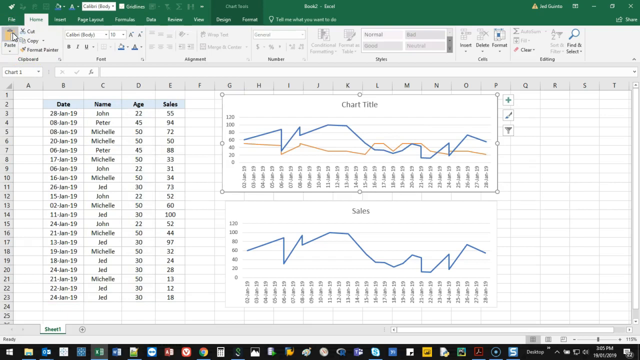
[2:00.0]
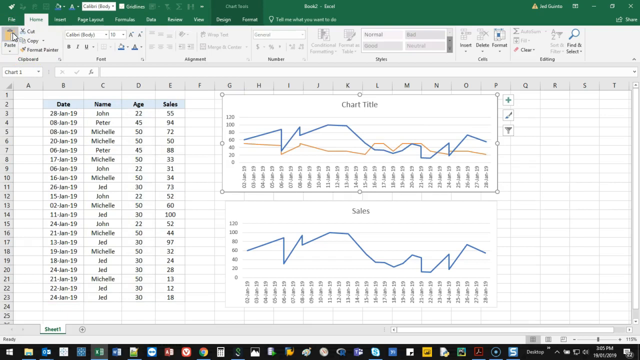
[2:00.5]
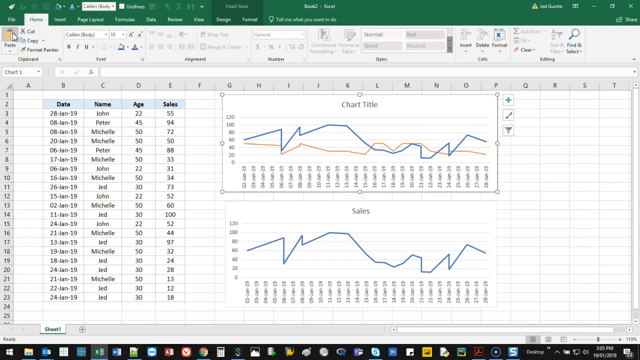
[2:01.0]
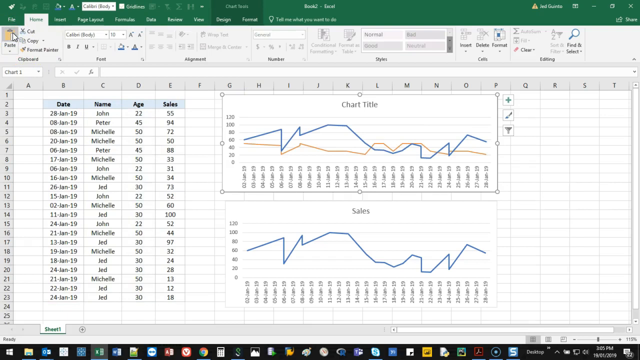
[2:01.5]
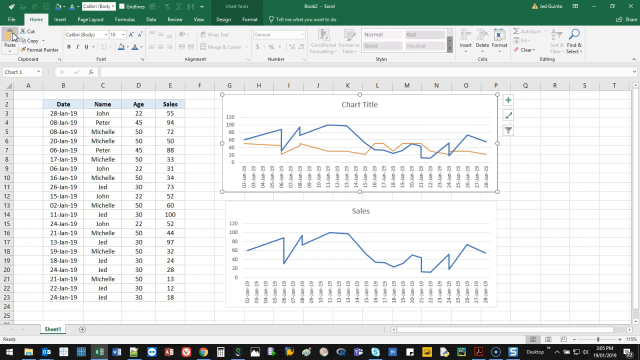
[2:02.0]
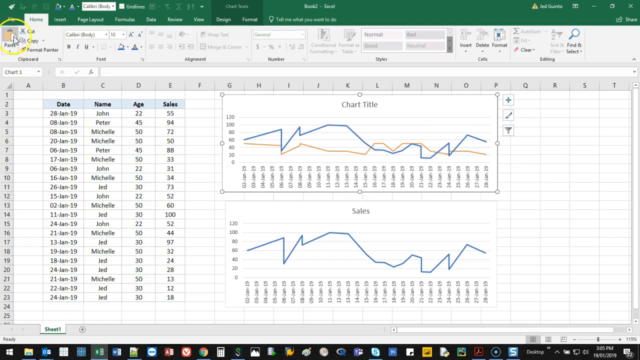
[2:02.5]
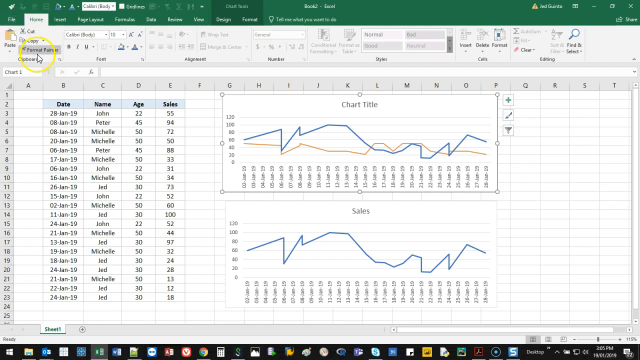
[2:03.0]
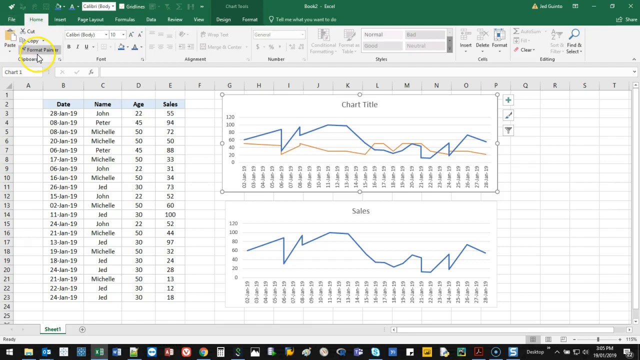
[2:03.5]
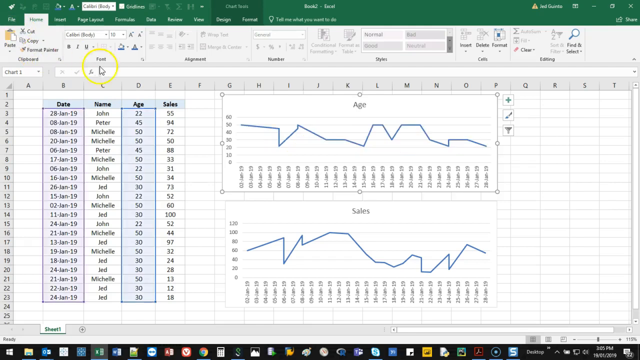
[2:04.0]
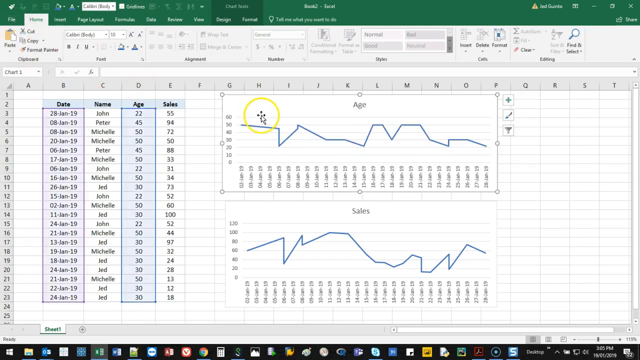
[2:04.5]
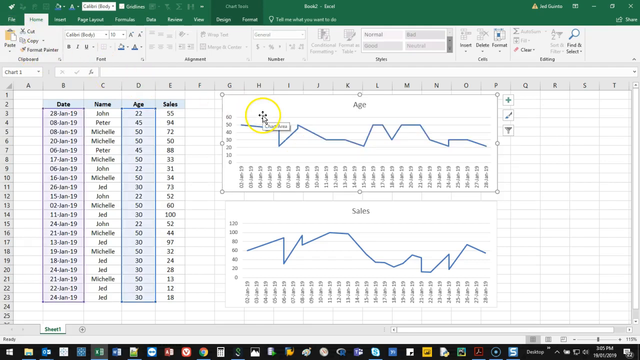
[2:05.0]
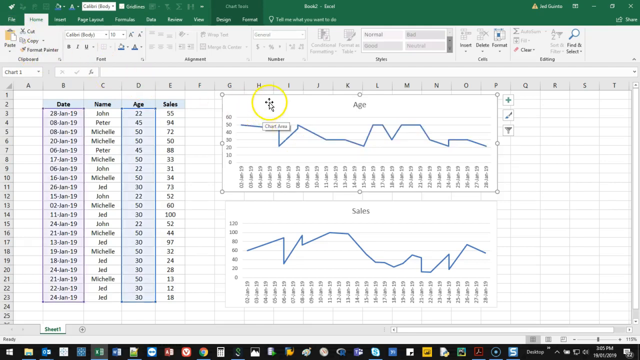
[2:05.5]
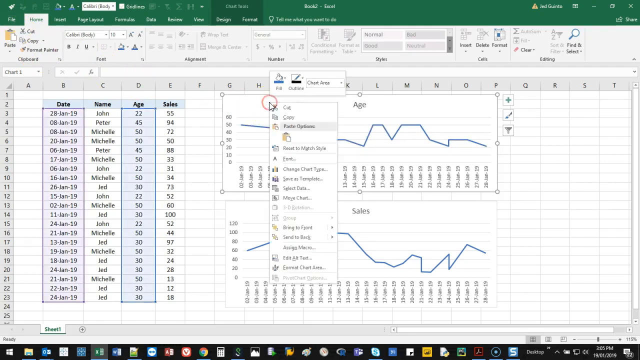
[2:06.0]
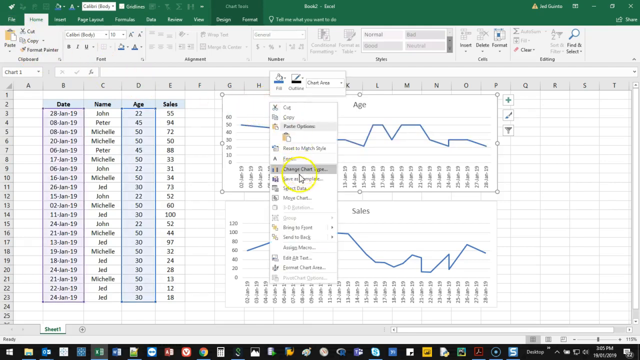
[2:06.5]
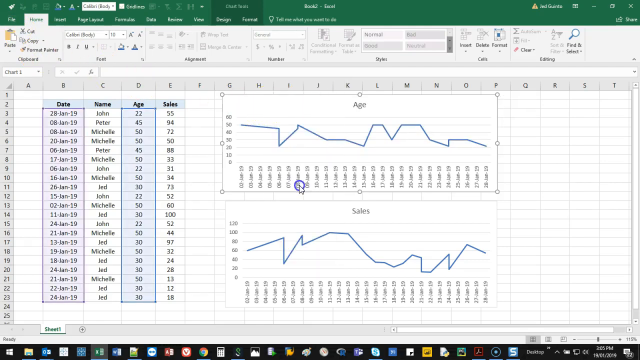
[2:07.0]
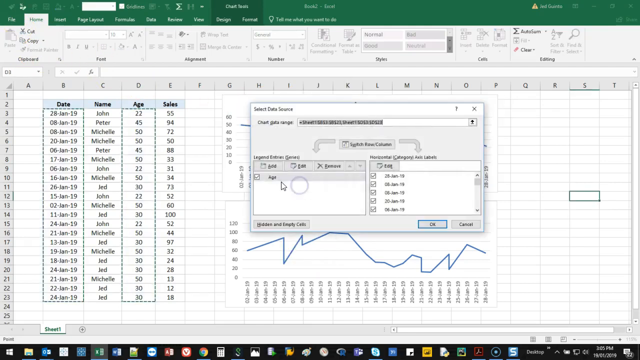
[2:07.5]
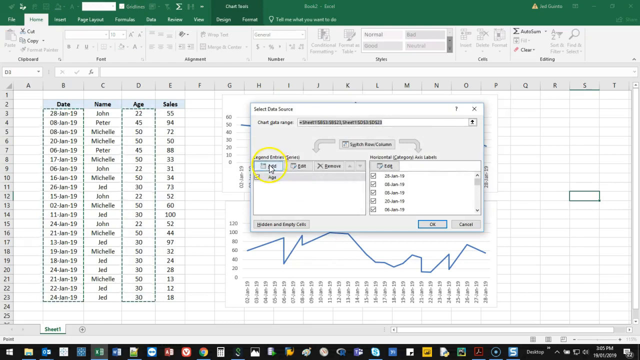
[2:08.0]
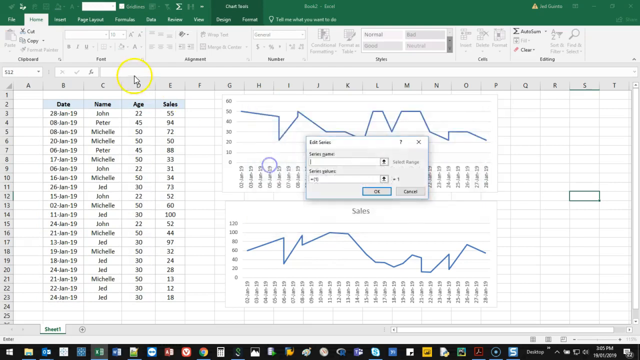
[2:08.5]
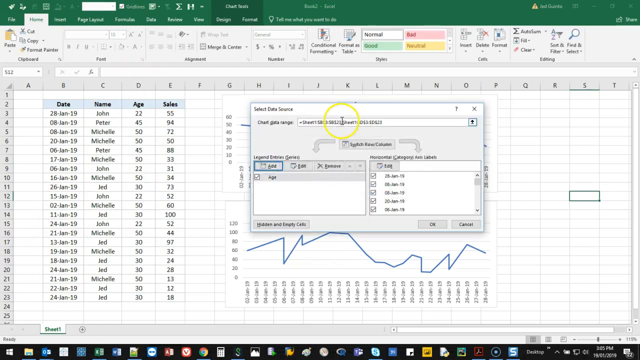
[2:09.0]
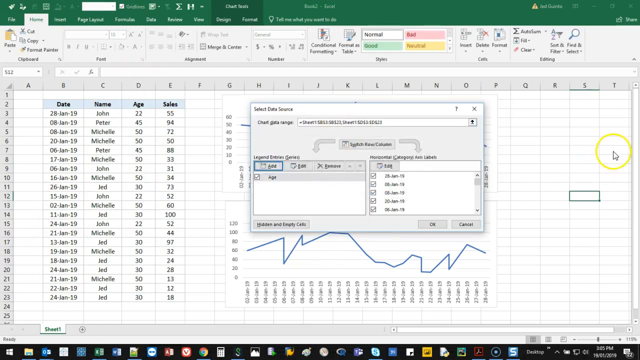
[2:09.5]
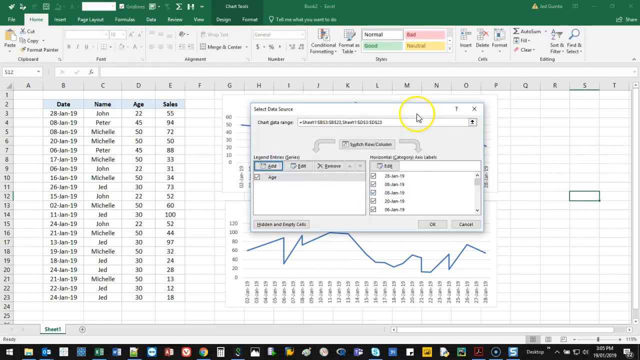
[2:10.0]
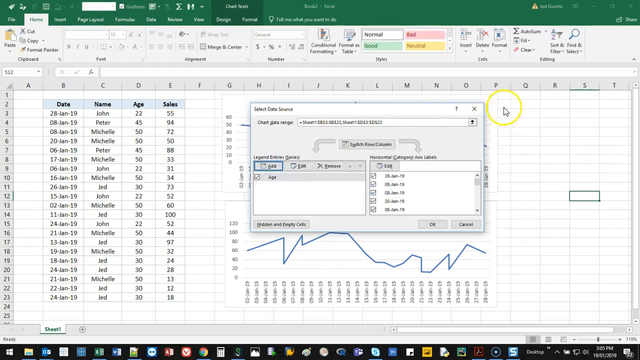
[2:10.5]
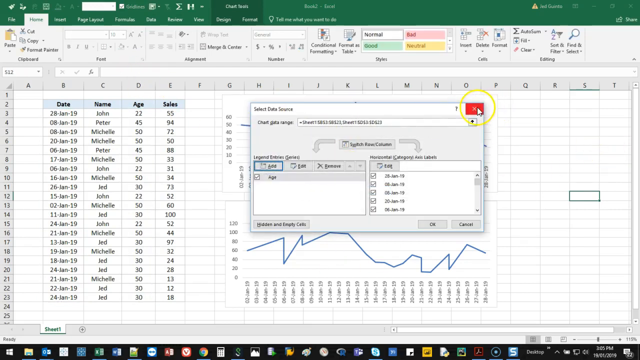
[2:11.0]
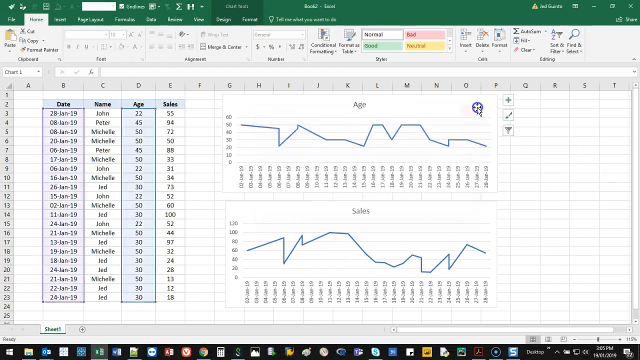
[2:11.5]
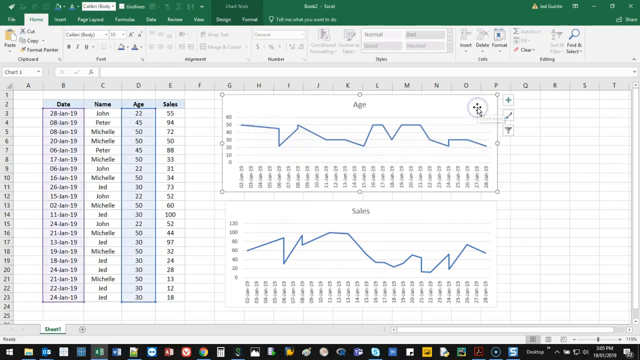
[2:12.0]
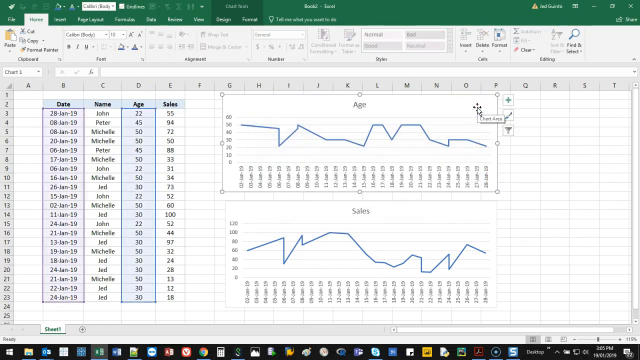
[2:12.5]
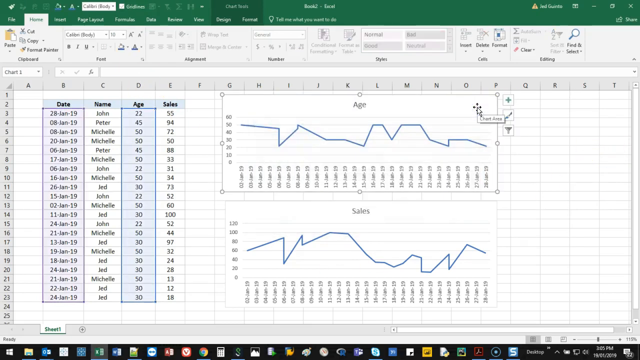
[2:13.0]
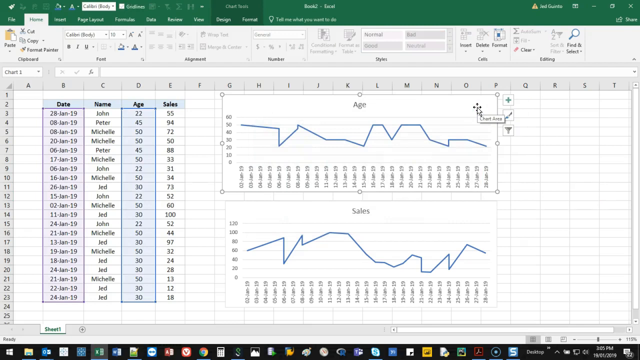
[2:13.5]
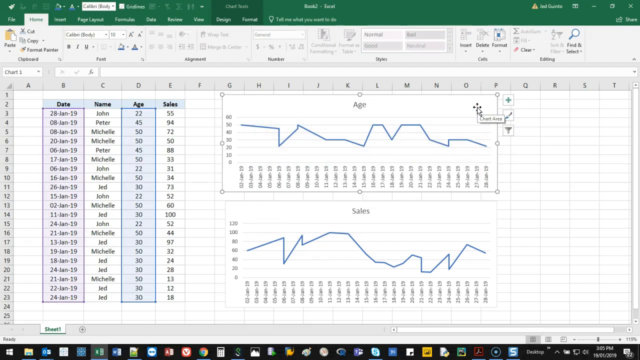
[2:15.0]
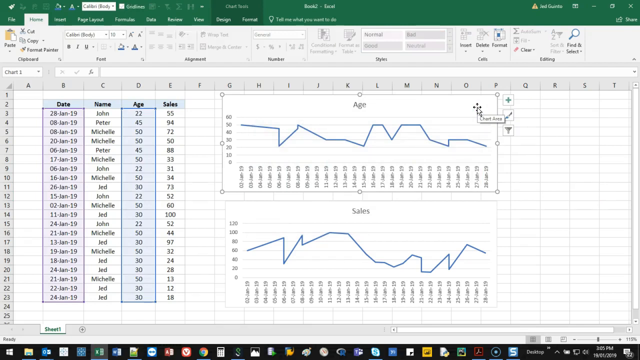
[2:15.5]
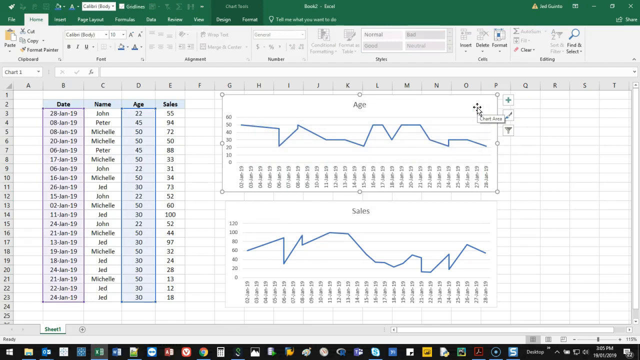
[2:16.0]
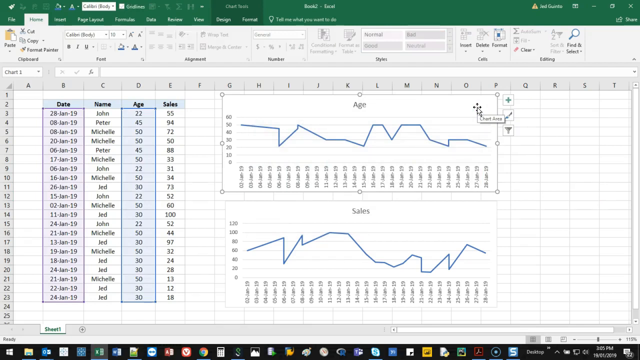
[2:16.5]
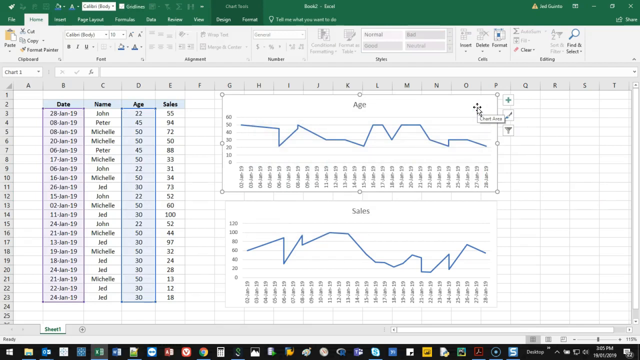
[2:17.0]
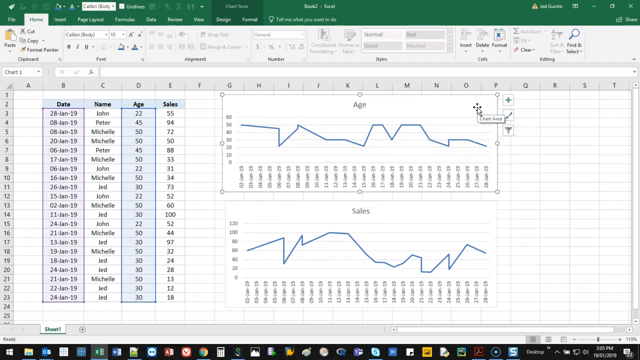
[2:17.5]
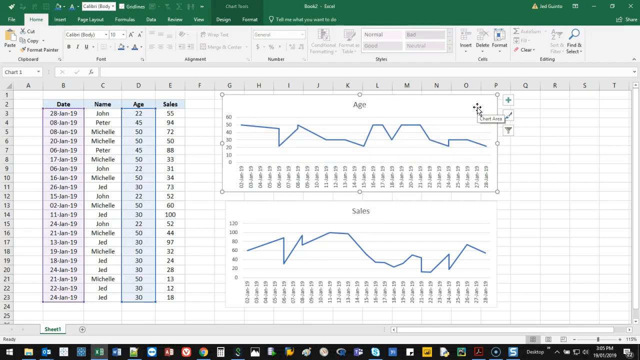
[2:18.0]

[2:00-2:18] The spreadsheet shows the date, name, age and sales data on the left and two charts on the right. The top chart has the title "chart title" and is a line chart with a blue and a yellow line. Underneath it is a chart for sales with only a blue line for all the data. The user goes to the top left side of the toolbar and seems to click the Format Painter button, which changes the top line graph from the chart title line graph to the age line graph showing all of the data in the date and age columns. On the left side of the spreadsheet, all of the dates in the date column and all of the ages in the age column are selected and highlighted in a light blue color. The user right-clicks on the age chart and clicks the Select Data option. The Select Data Source window pops up, and the user clicks the add button under the legend entries panel. A small window titled Edit Series pops up with text input boxes for series name and series value. The user goes back to the Select Data Source box and clicks the red X button in the top right corner. They then select the age line graph on the spreadsheet, and a small white rectangular box saying "chart area" appears near the cursor.